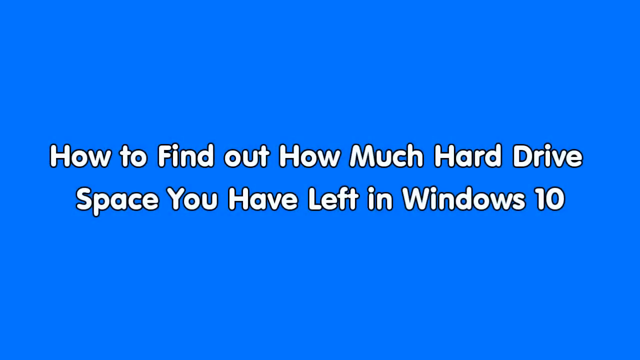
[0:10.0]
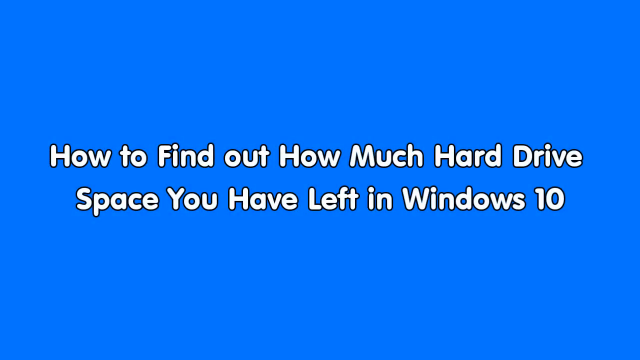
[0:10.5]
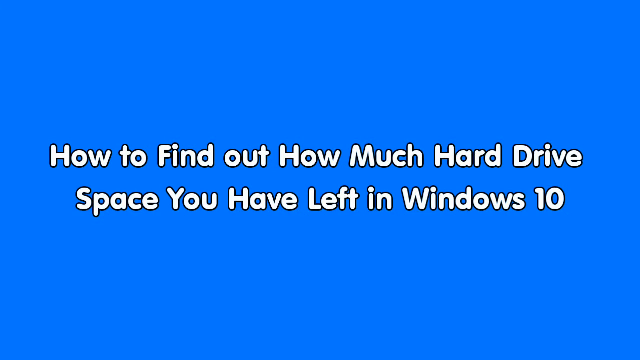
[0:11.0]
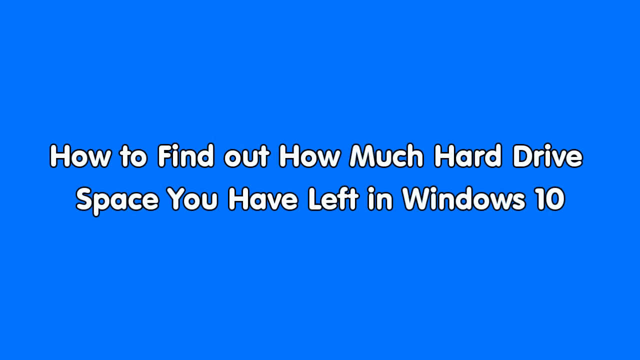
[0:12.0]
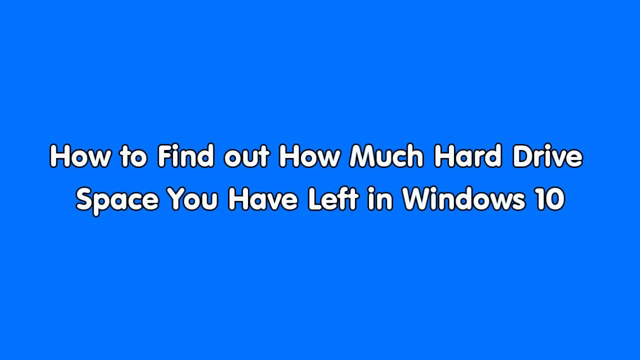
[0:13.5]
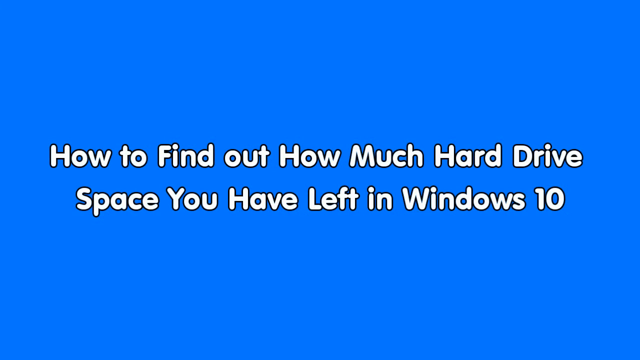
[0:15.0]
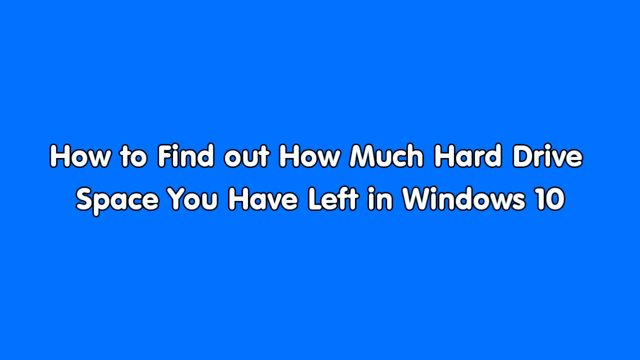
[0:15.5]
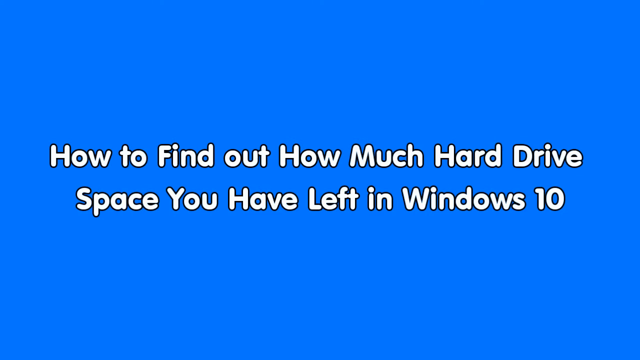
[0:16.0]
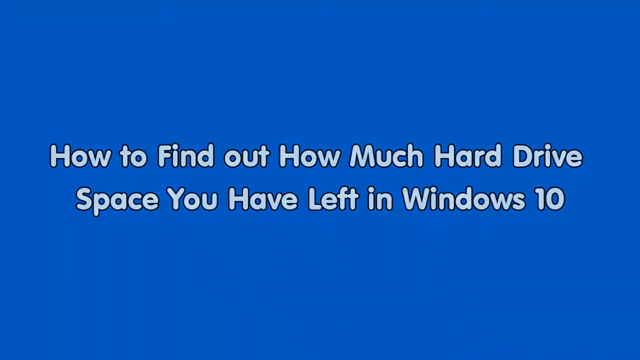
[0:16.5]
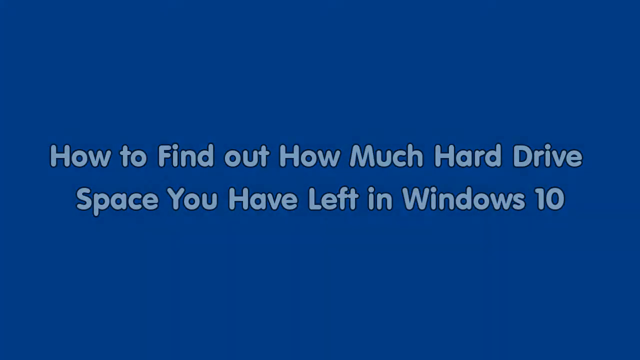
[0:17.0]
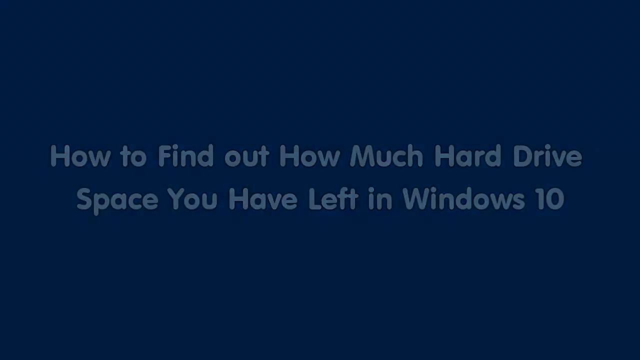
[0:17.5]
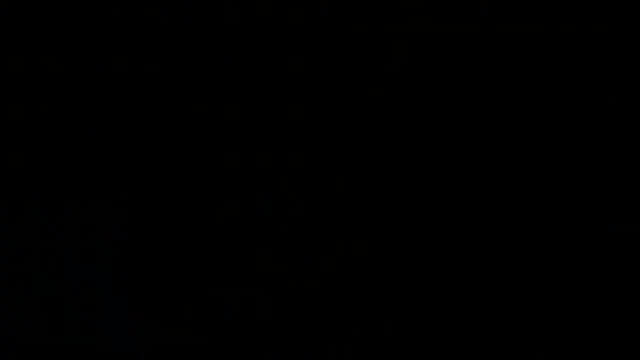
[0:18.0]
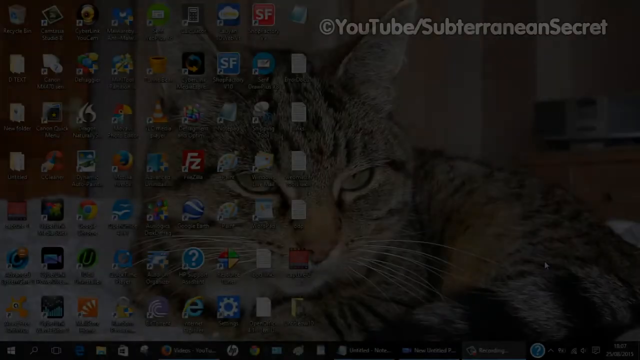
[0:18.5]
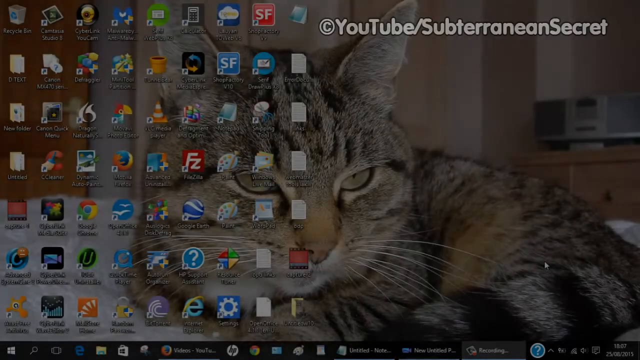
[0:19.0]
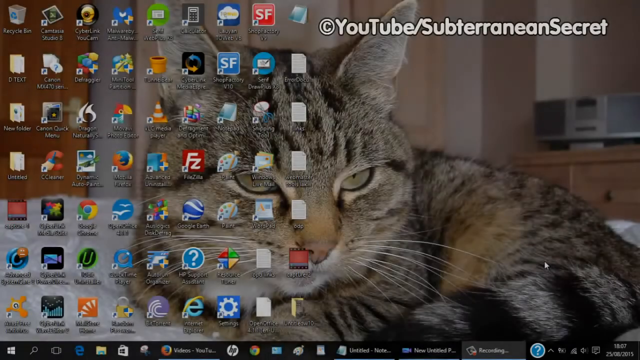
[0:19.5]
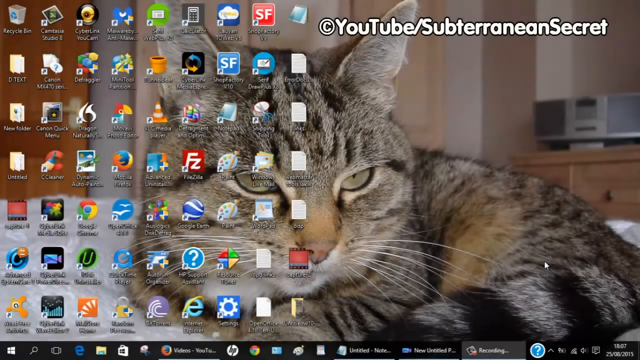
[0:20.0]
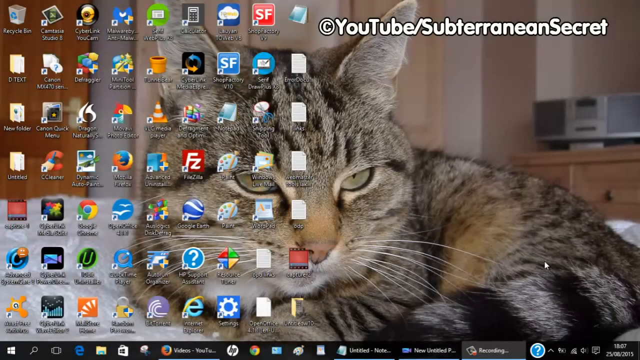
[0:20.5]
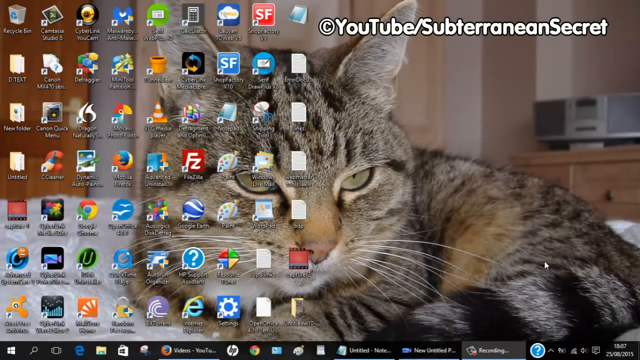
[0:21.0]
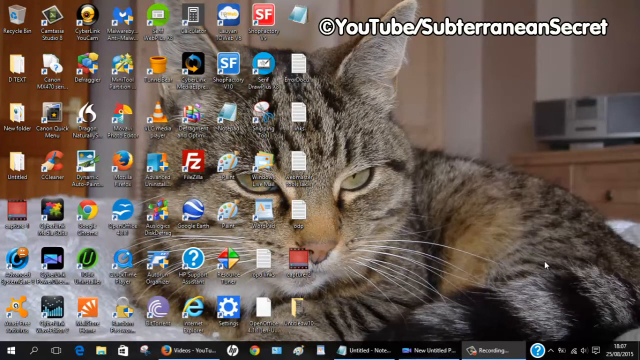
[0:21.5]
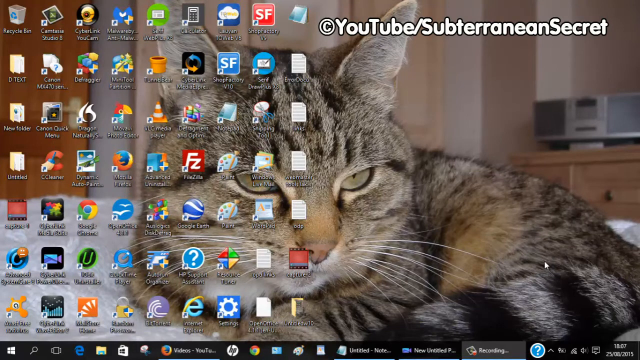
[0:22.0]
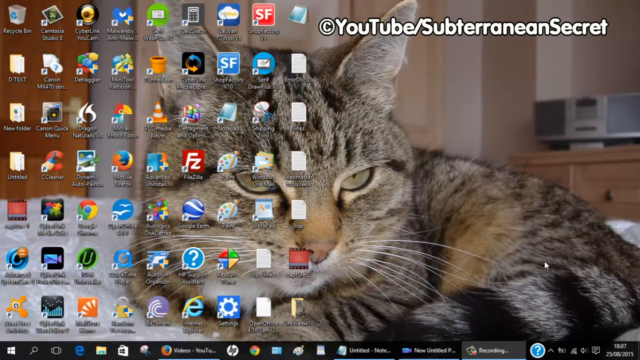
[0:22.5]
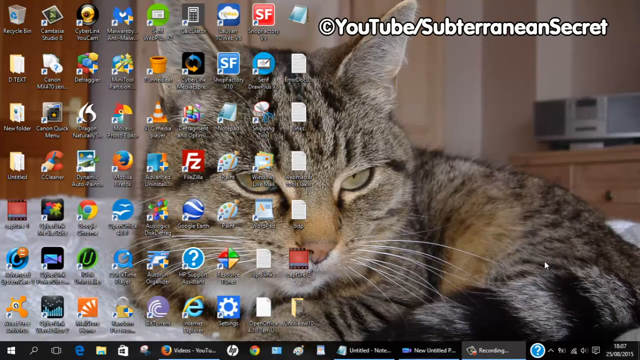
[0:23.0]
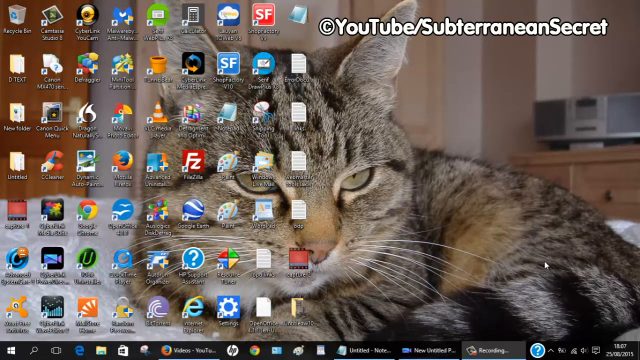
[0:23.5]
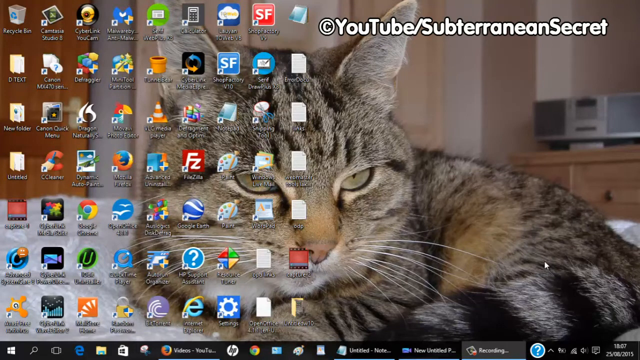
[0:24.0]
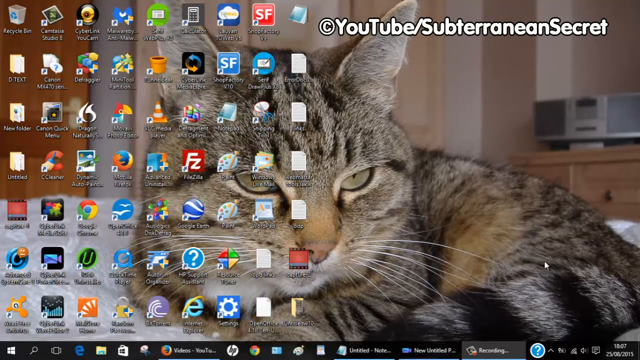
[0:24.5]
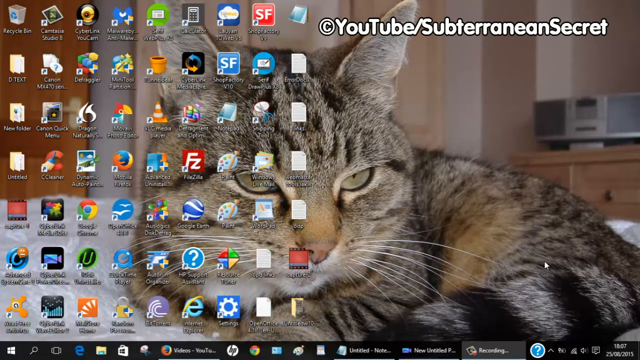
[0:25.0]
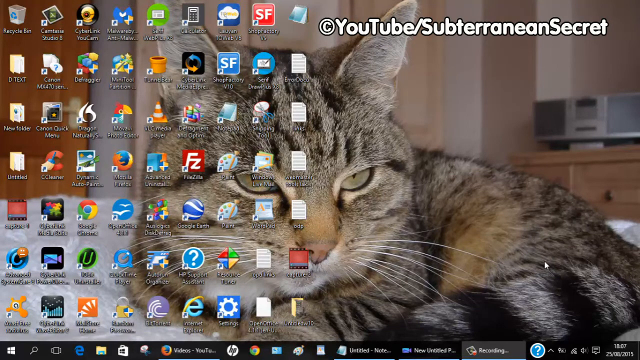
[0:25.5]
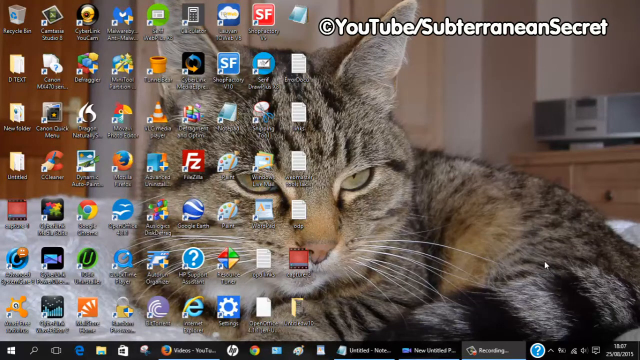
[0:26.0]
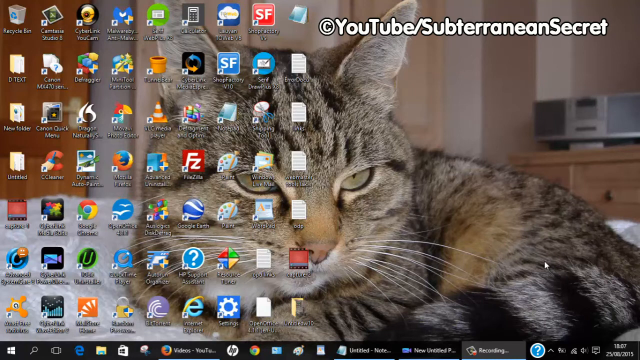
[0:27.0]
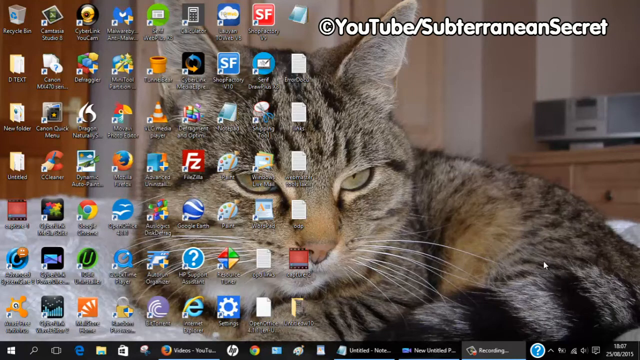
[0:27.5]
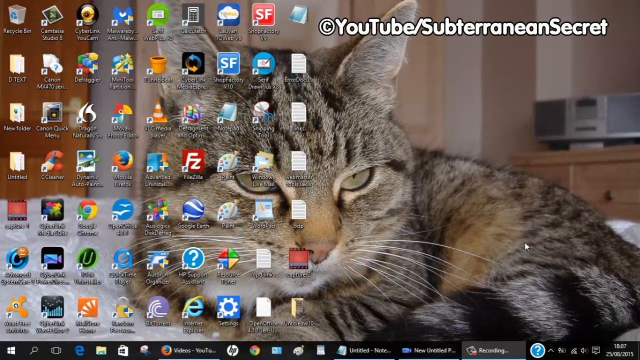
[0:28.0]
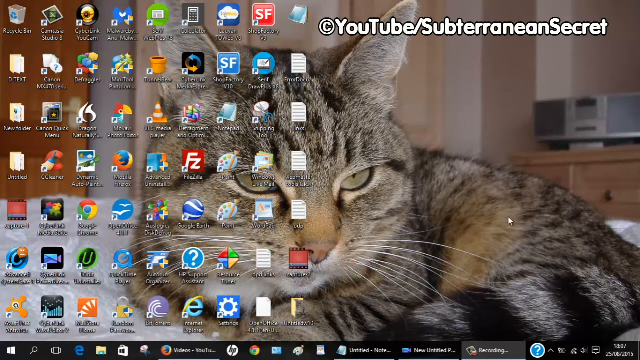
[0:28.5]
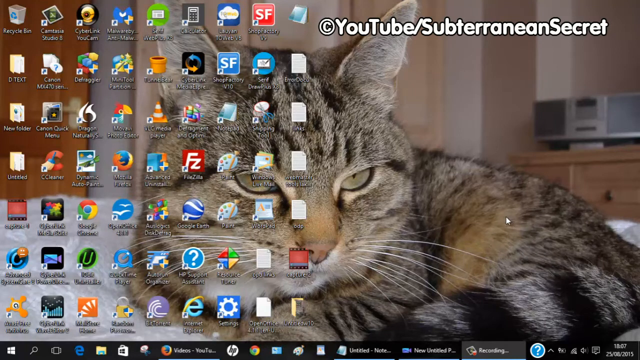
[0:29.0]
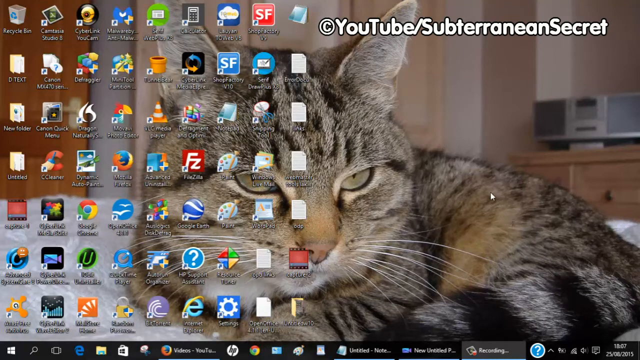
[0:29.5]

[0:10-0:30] A PC desktop home screen has a wallpaper photo of a beige cat with white whiskers lying on a white sheet, as if on a bed. Behind it is a bureau with a speaker on top, in a room painted a peach color with a brown wooden door. A grid of application icons is arranged on the left side of the screen, with the recycling bin in the top left corner. There are icons for Firefox, Chrome, OpenOffice, VLC media, Internet Explorer, Google Earth, Paint and Snipping Tool, plus a few other folders. In the top right corner is a copyright logo with the white text "YouTube/subterranean secret." It looks like a how-to video by a YouTube content creator on finding out how much hard drive space is left in Windows 10.